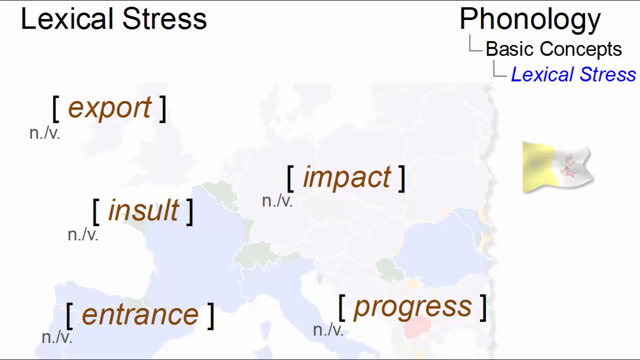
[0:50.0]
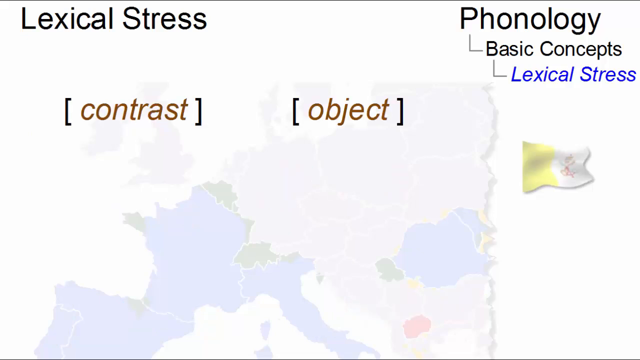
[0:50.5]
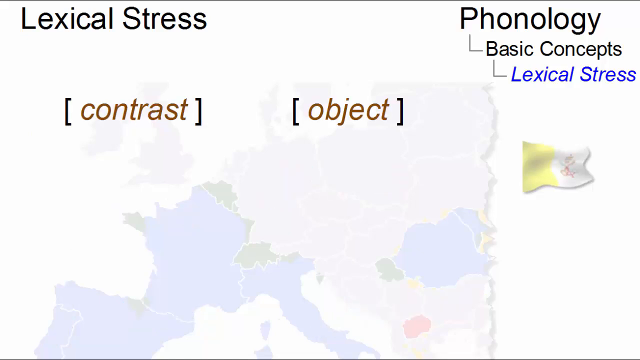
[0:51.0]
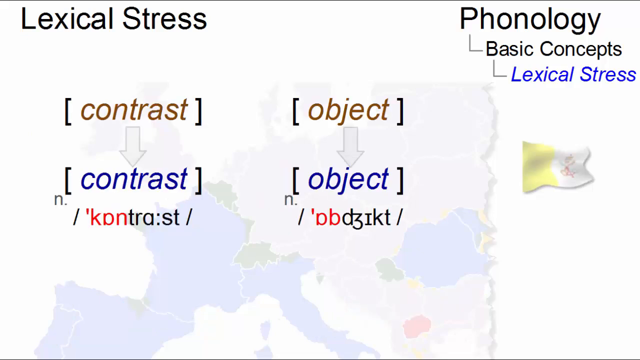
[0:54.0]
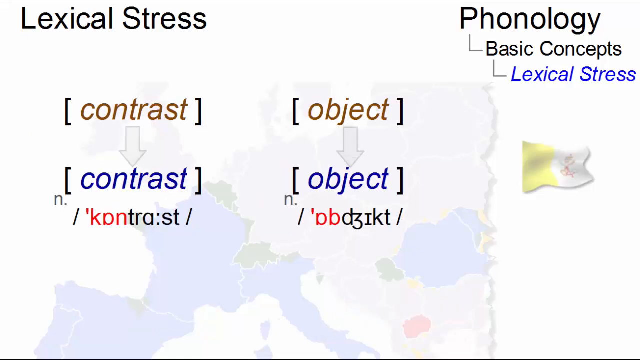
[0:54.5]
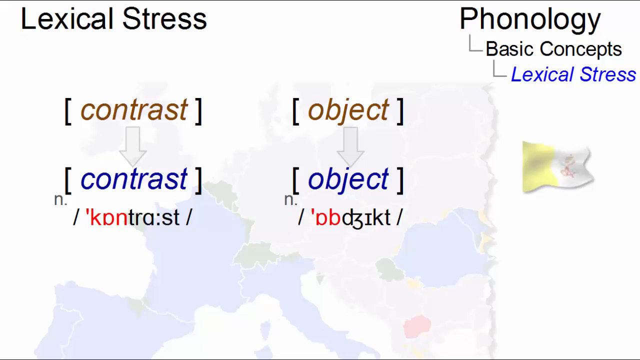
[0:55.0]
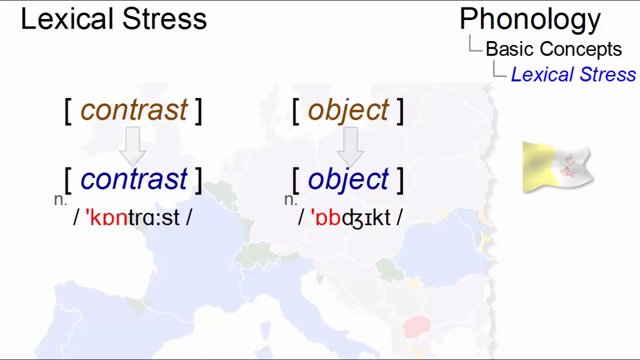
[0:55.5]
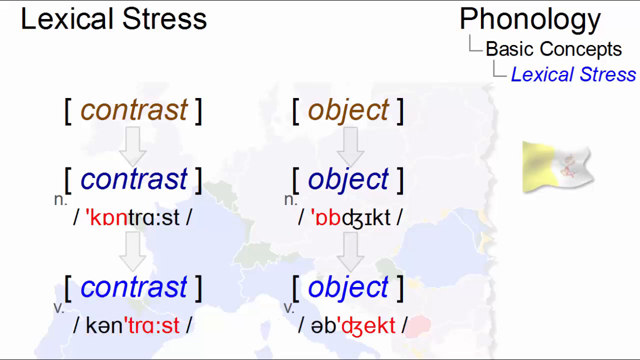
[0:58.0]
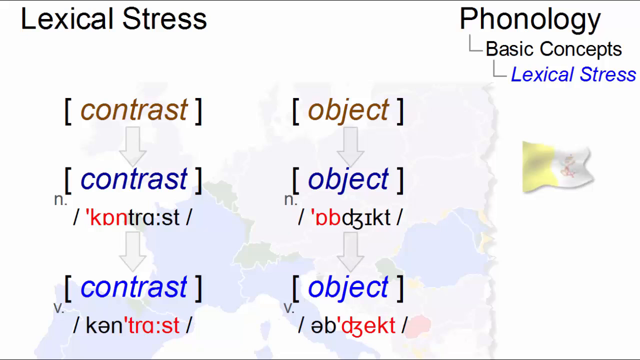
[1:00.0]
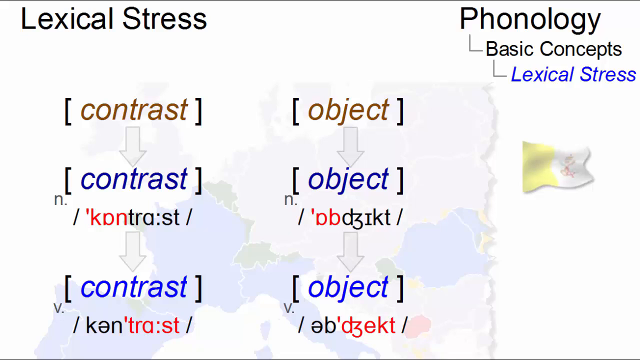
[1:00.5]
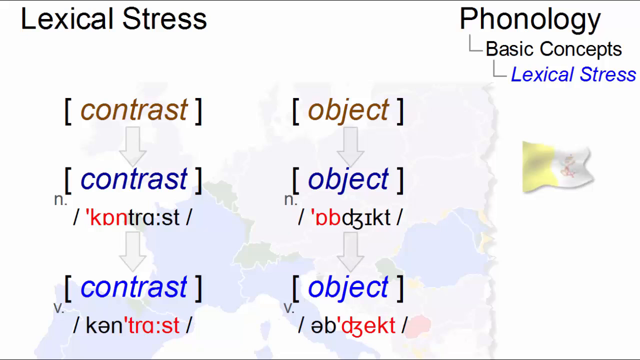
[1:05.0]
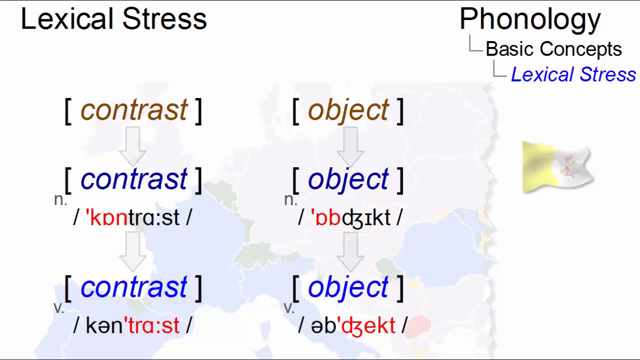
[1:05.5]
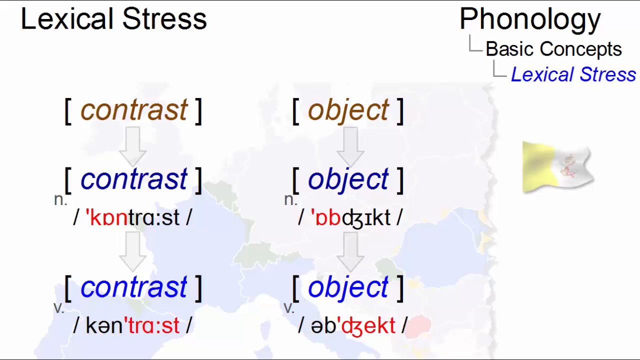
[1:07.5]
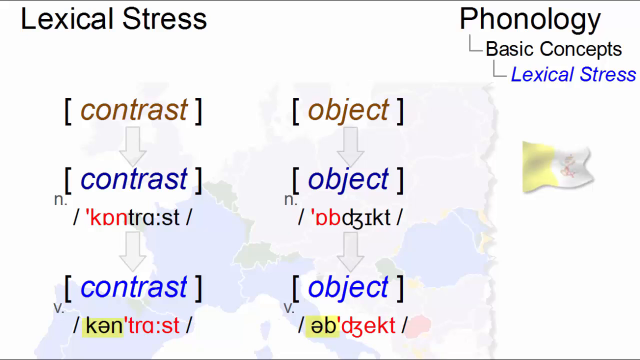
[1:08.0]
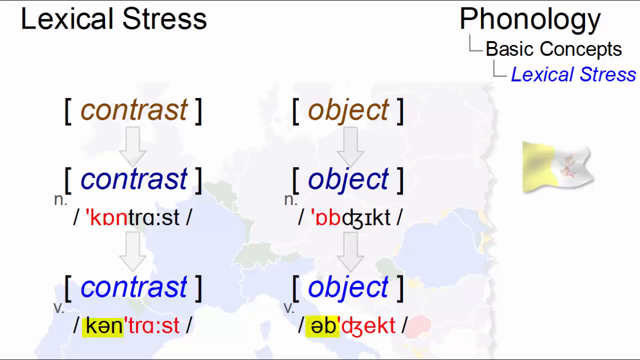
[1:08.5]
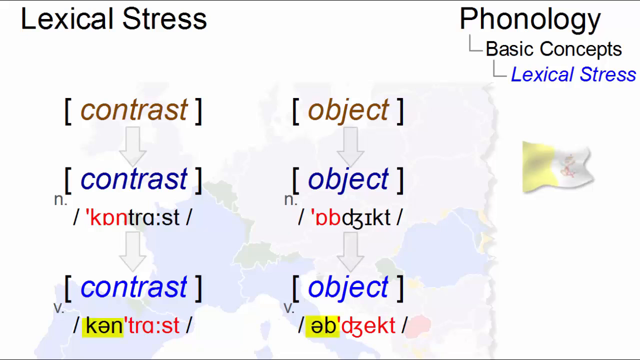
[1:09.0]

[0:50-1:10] "Lexical stress" is still written at the top left of the screen, and "phonology, basic concept" and "lexical stress" are written at the top right. There is a map in the background, and the words export, insult, impact, entrance and progress appear all over the screen, with noun and verb written under each. The words "construct" and "object" then appear on the screen in a brownish color, along with how to pronounce each word and where to put the emphasis. Parts of the words are highlighted with a yellow marker: "con" in construct and "ob" in object.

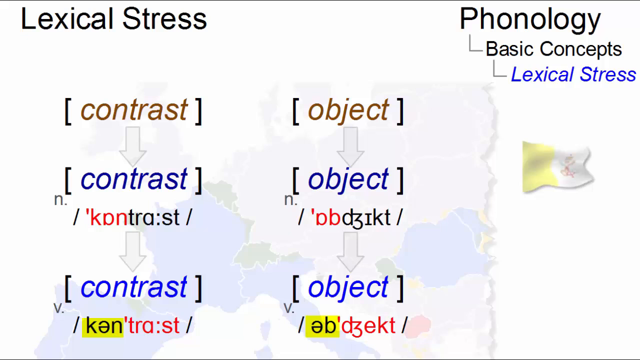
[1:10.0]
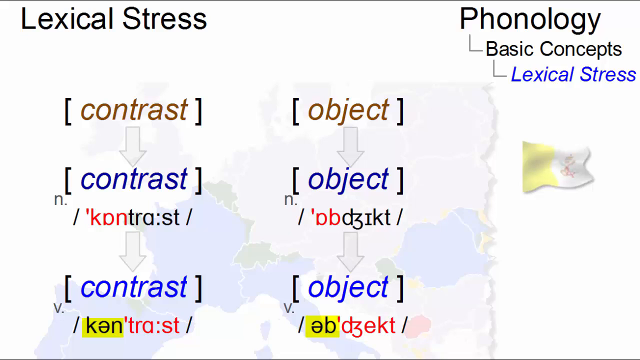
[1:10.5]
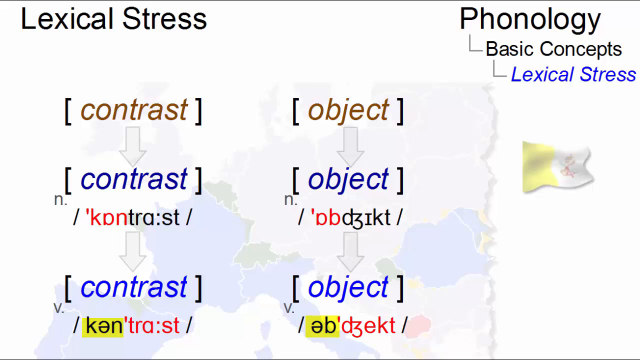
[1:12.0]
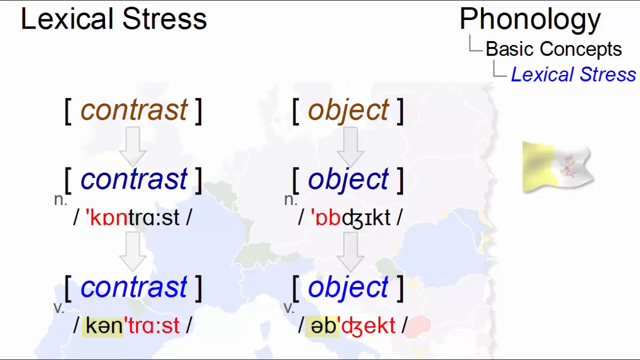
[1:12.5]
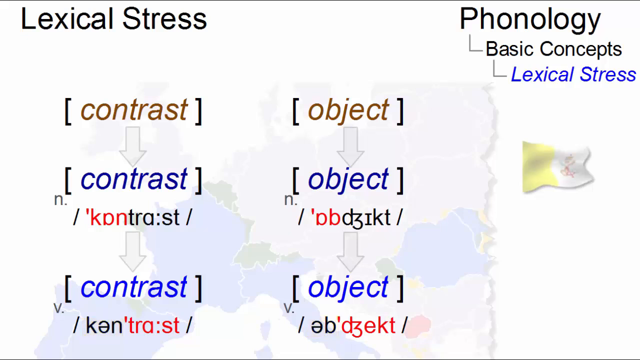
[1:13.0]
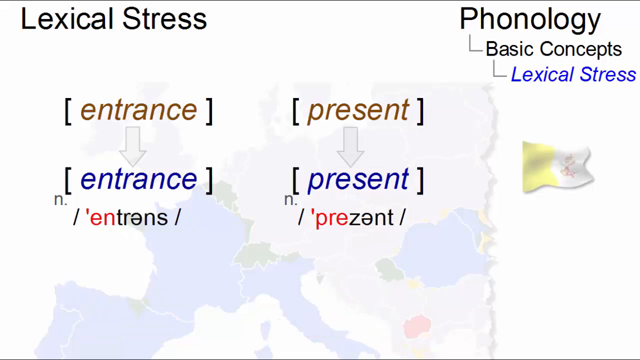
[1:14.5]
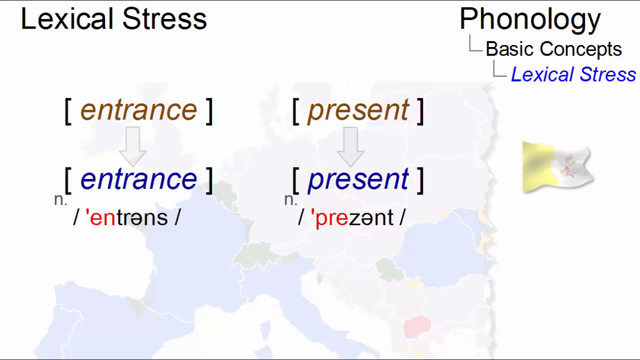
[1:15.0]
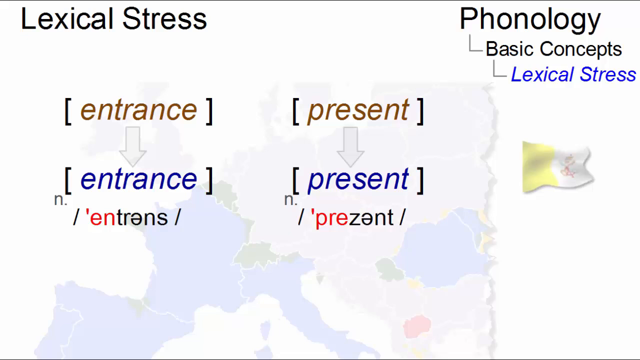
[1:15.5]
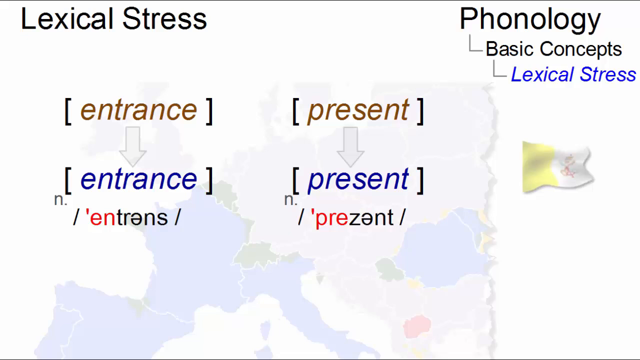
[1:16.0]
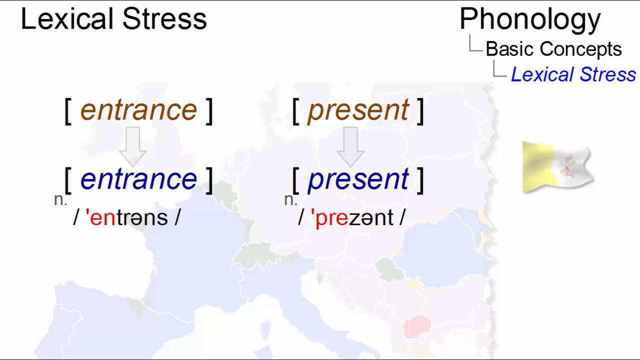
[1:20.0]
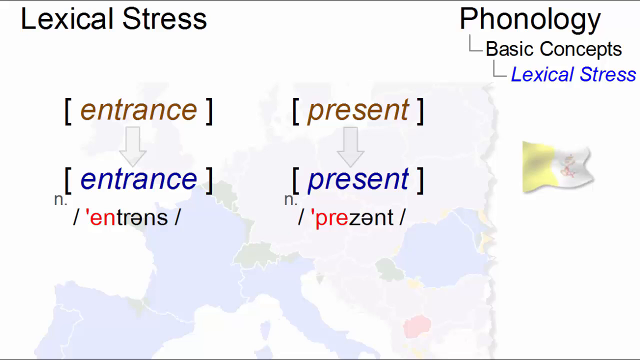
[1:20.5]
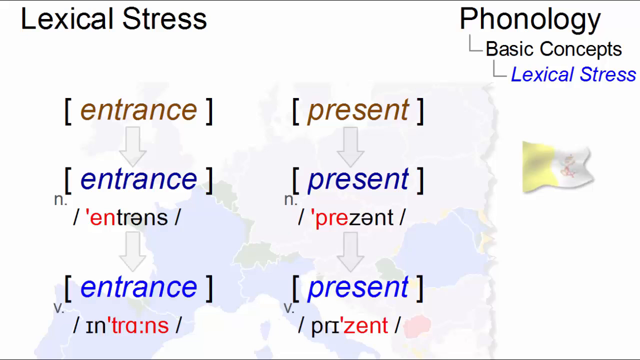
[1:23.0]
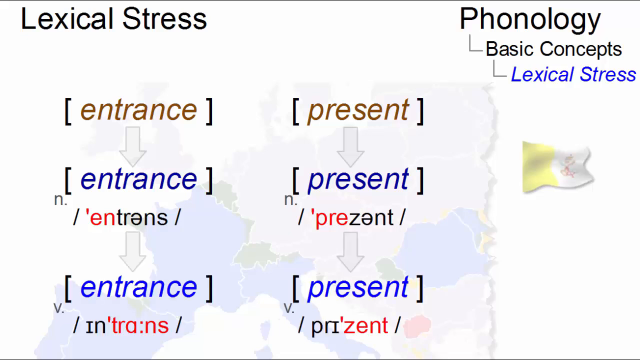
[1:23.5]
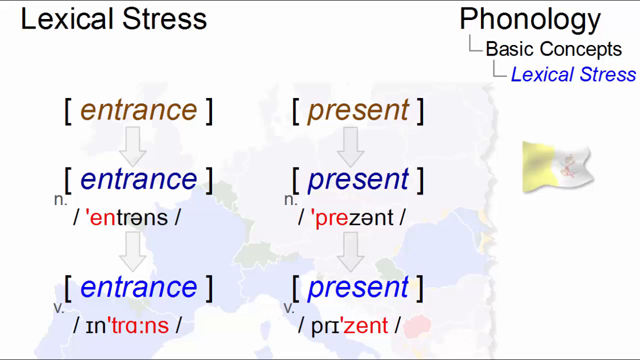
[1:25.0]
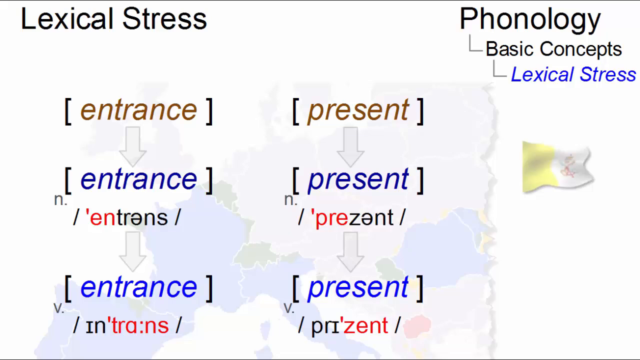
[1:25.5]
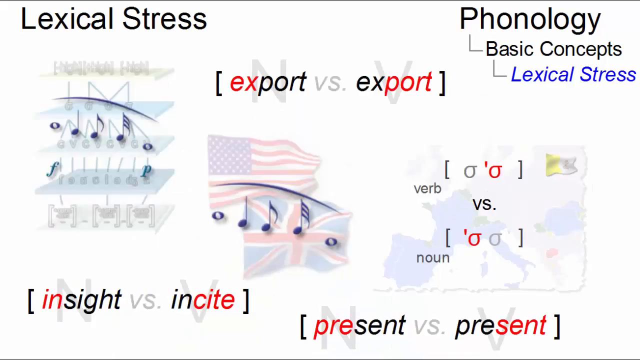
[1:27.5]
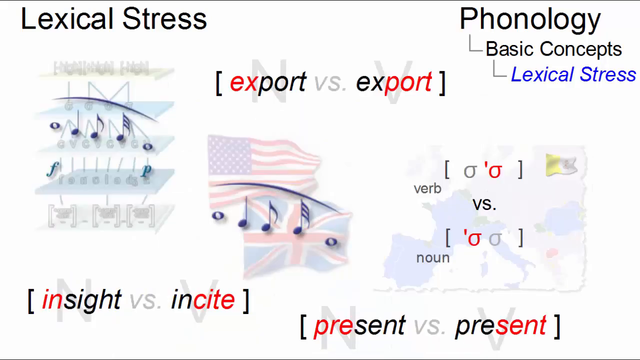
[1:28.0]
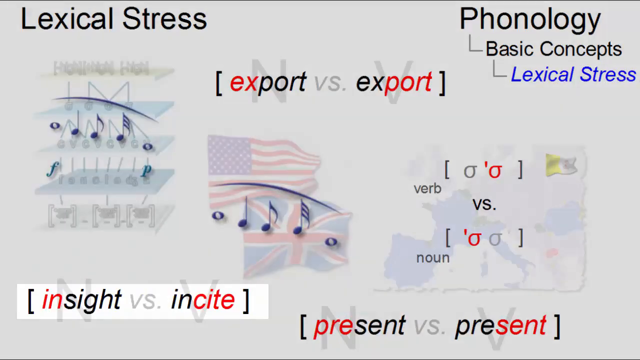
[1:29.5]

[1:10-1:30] "Lexical stress" is still written at the top left of the screen and "phonology" at the top right, with "basic concept" under it and "lexical stress" under that. The words construct and object are written in square brackets, and under them the pronunciation of the first part of each word is shown. Two other words, entrance and present, are shown along with which part of each word to stress more. It shows that as nouns the words are stressed on the first part, and as verbs they are stressed on the last part. The screen then goes back to normal.